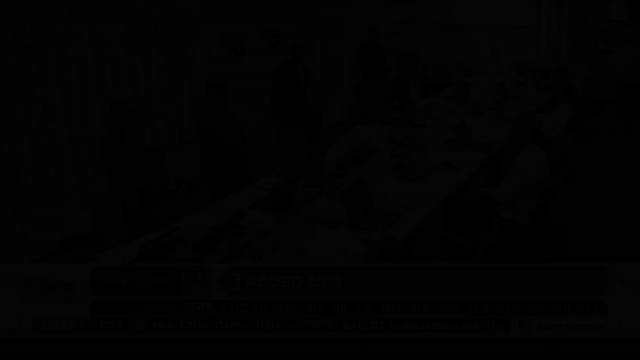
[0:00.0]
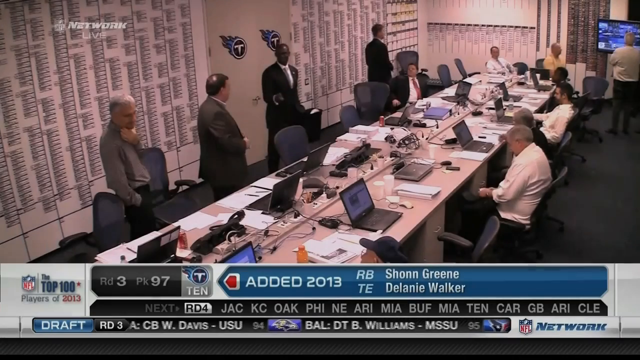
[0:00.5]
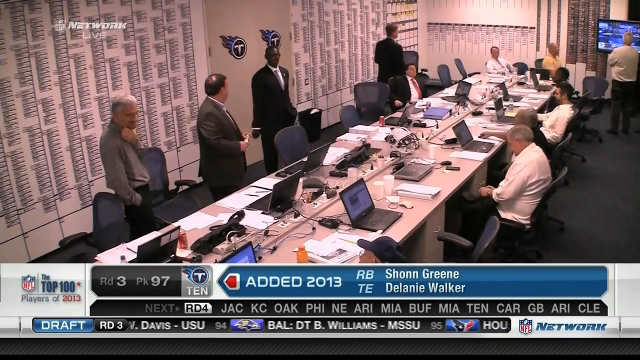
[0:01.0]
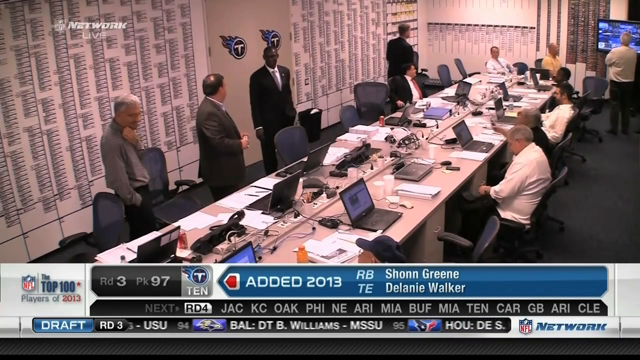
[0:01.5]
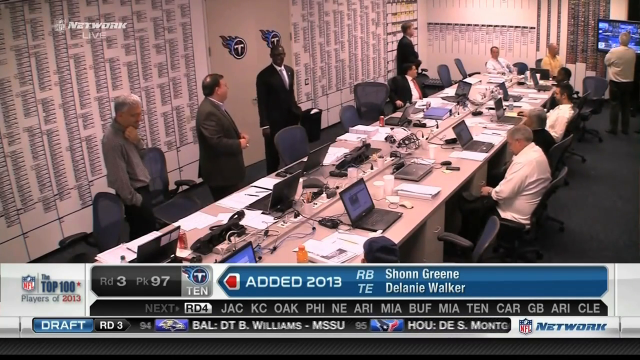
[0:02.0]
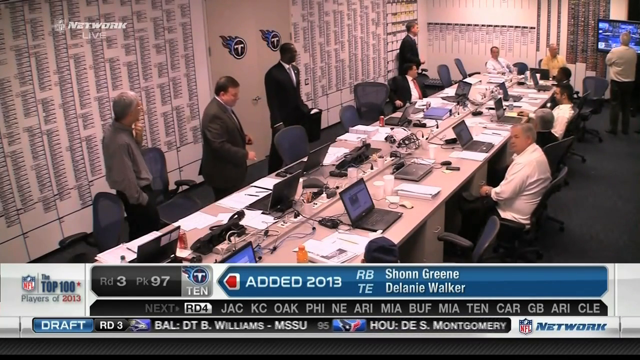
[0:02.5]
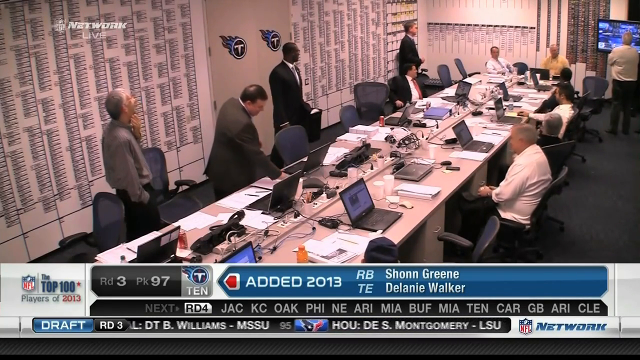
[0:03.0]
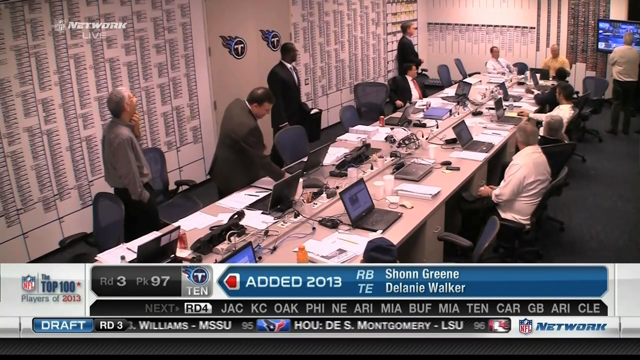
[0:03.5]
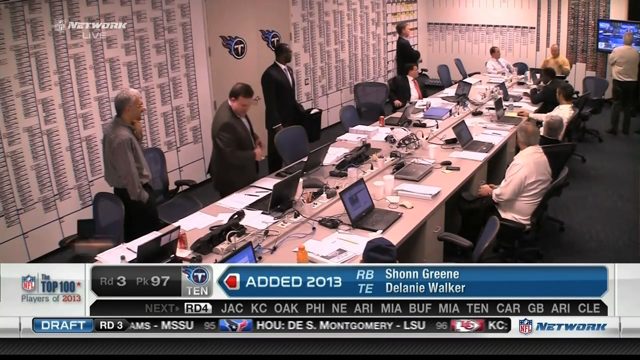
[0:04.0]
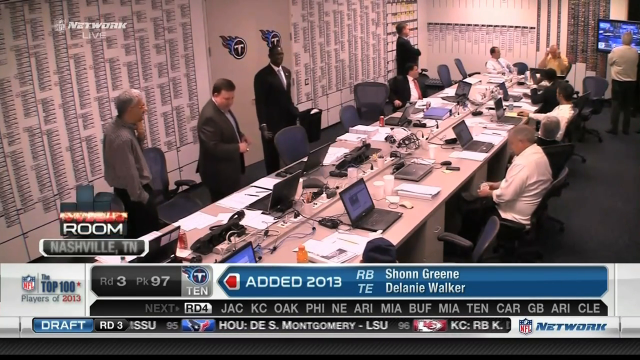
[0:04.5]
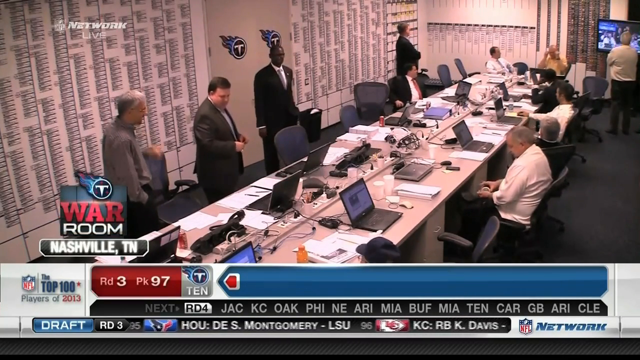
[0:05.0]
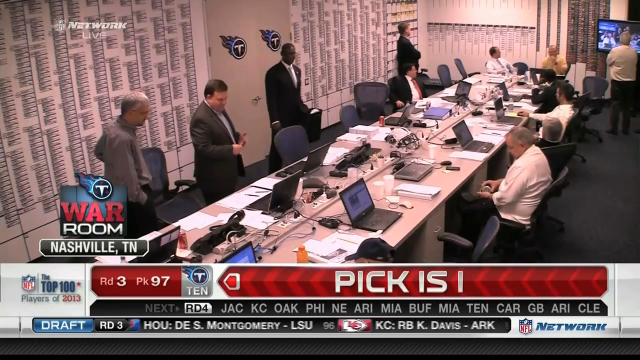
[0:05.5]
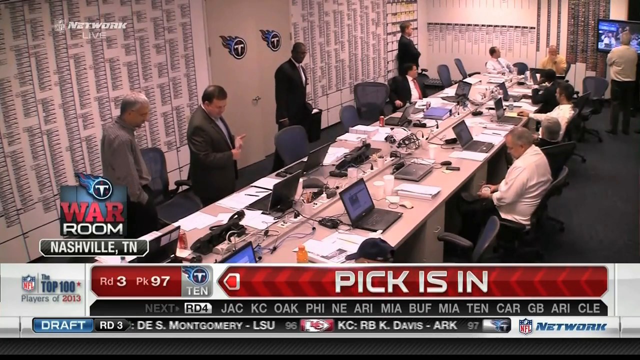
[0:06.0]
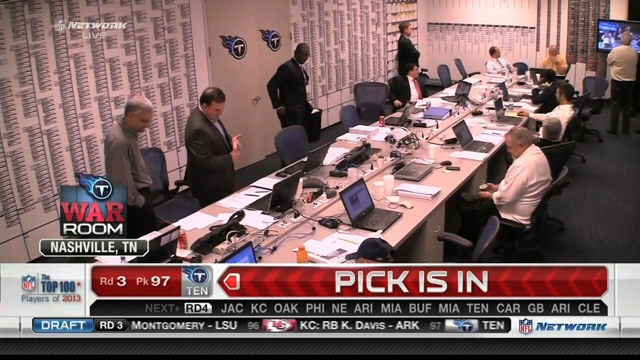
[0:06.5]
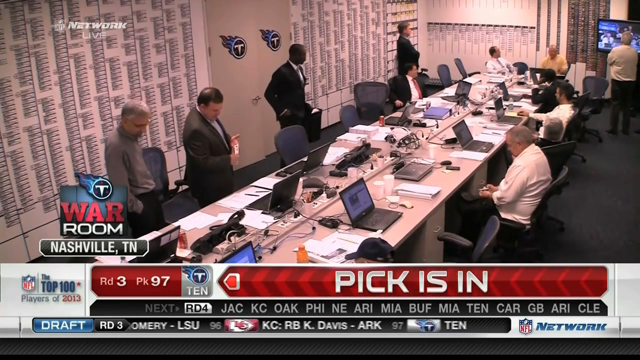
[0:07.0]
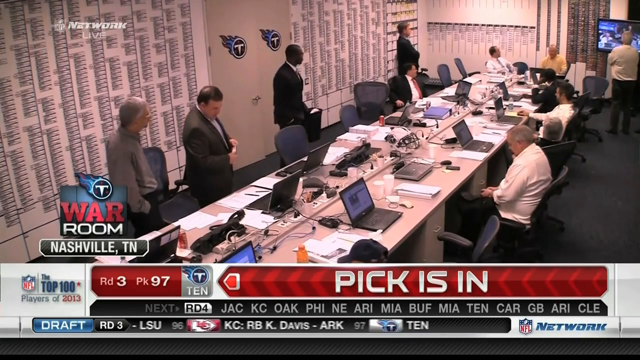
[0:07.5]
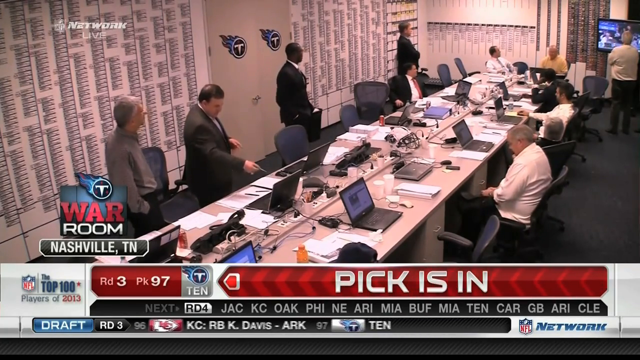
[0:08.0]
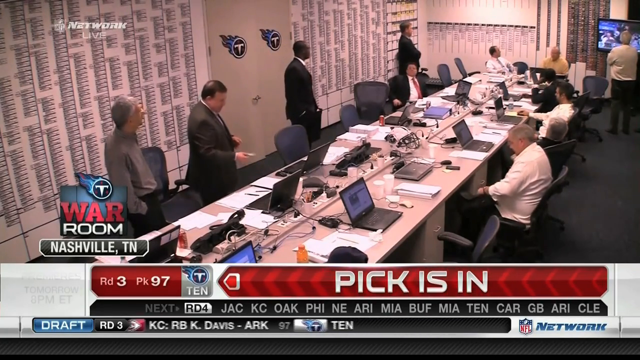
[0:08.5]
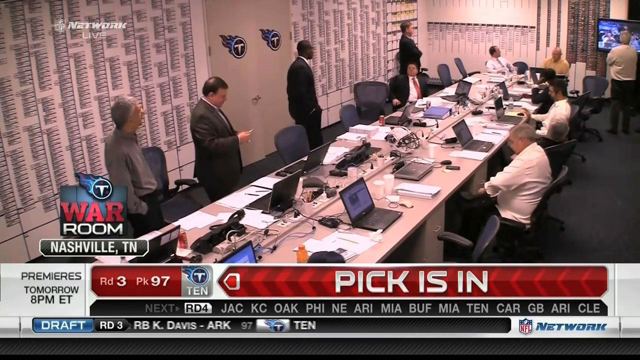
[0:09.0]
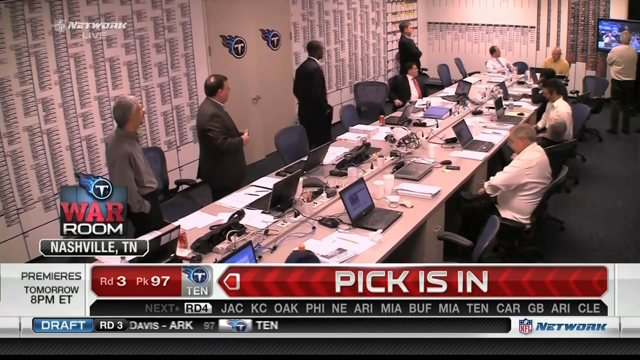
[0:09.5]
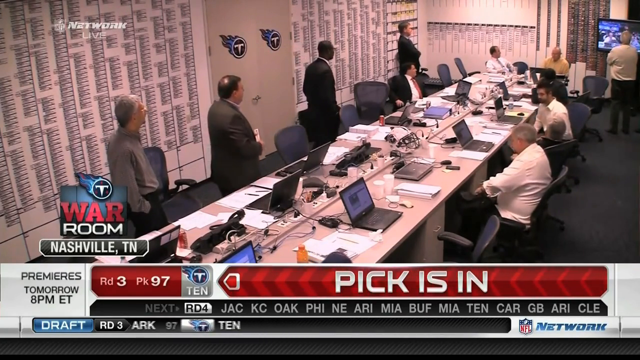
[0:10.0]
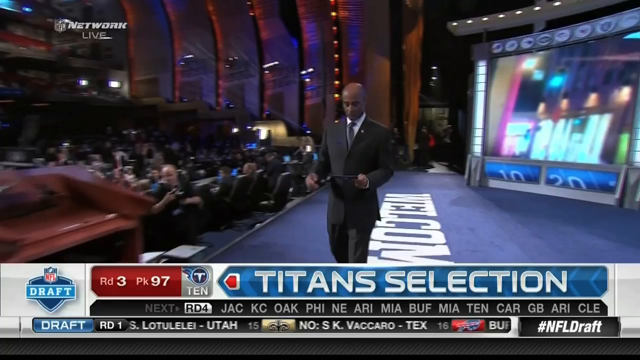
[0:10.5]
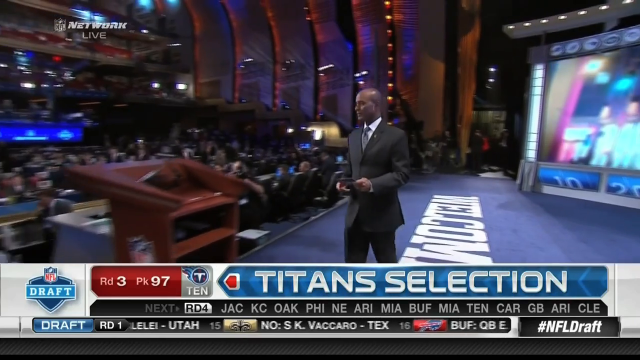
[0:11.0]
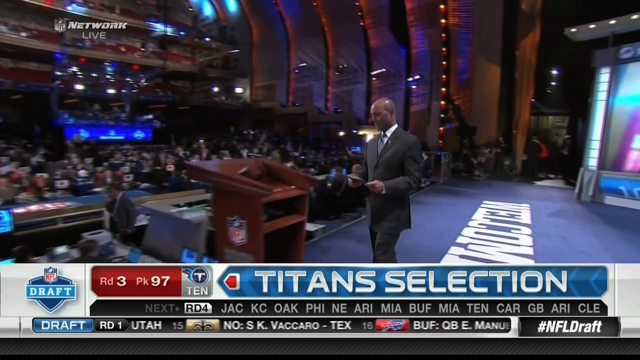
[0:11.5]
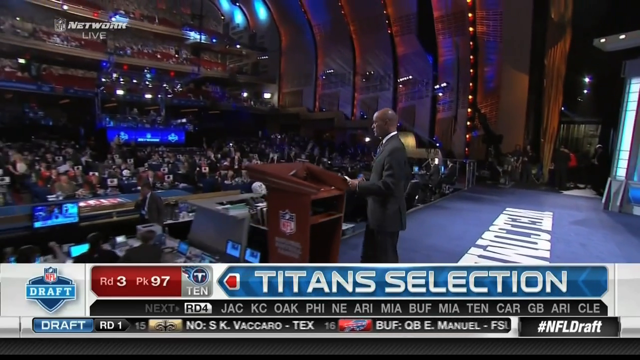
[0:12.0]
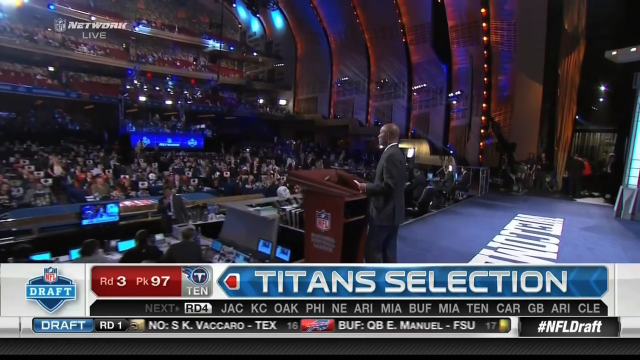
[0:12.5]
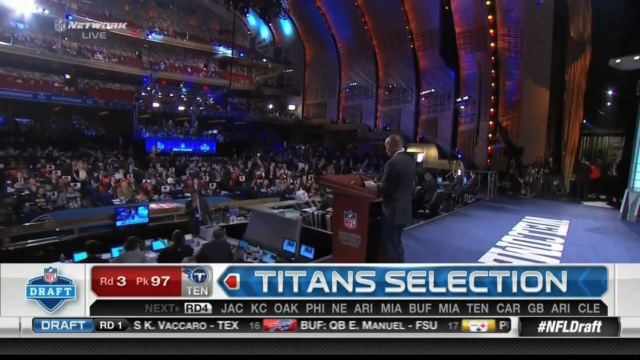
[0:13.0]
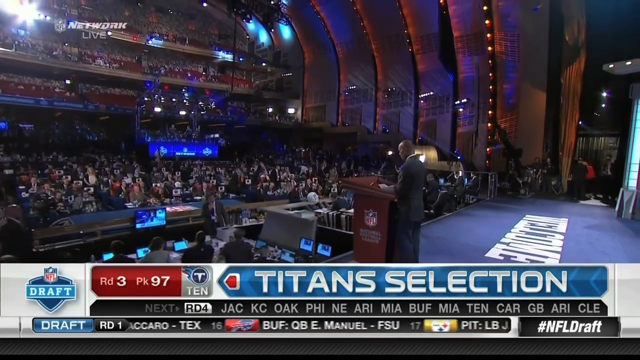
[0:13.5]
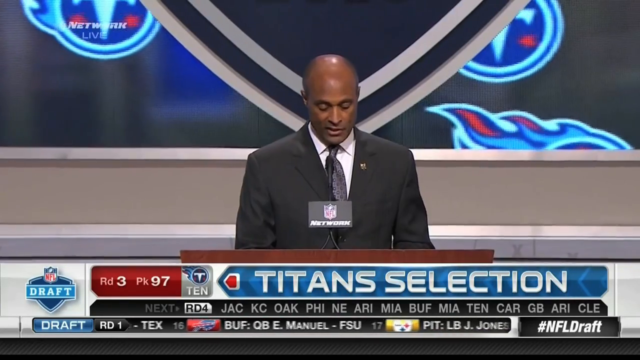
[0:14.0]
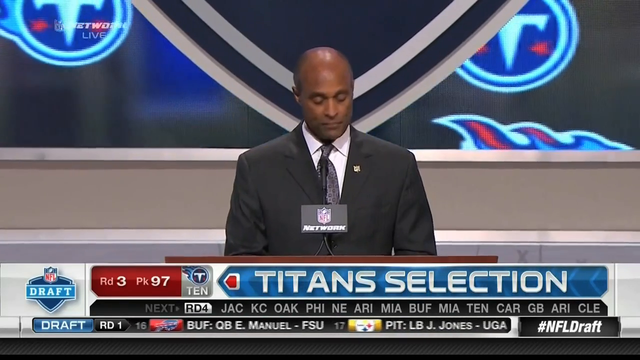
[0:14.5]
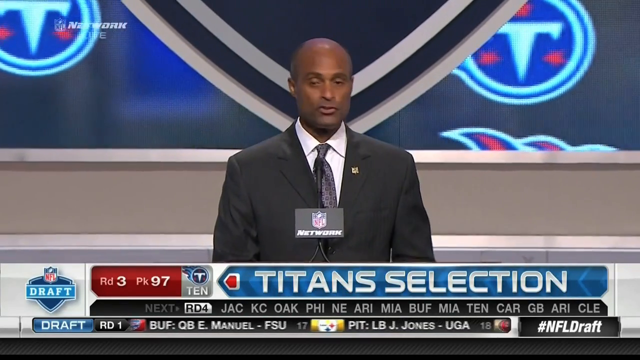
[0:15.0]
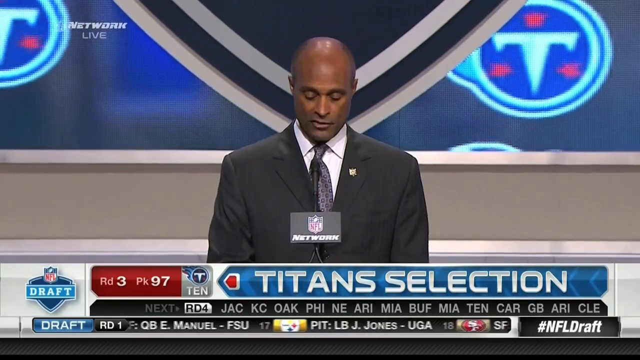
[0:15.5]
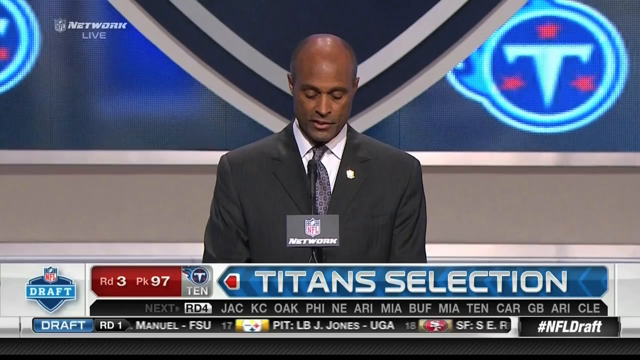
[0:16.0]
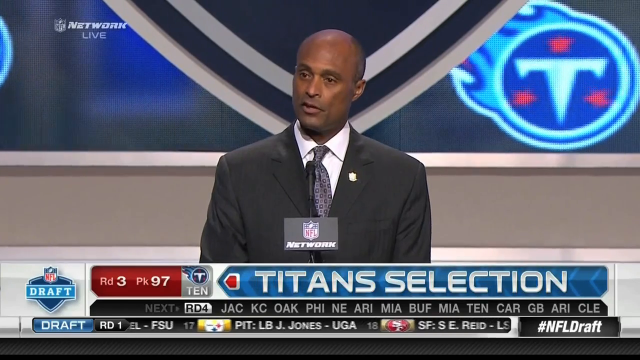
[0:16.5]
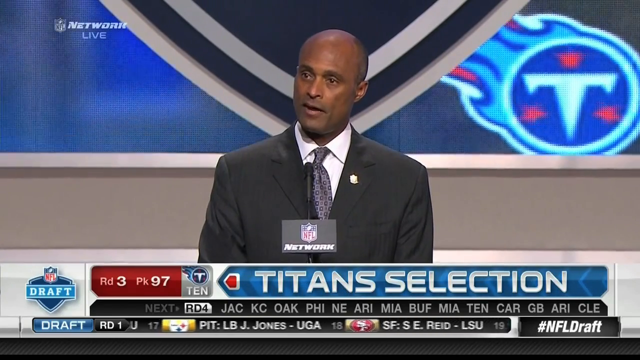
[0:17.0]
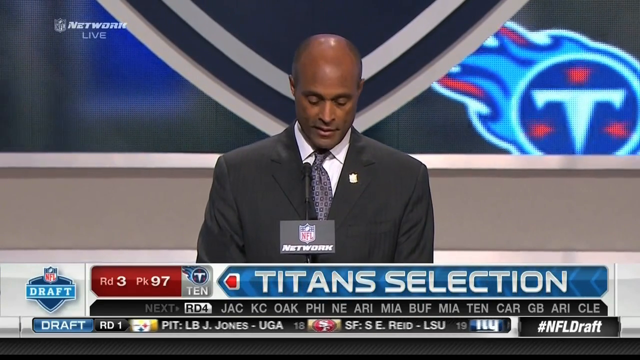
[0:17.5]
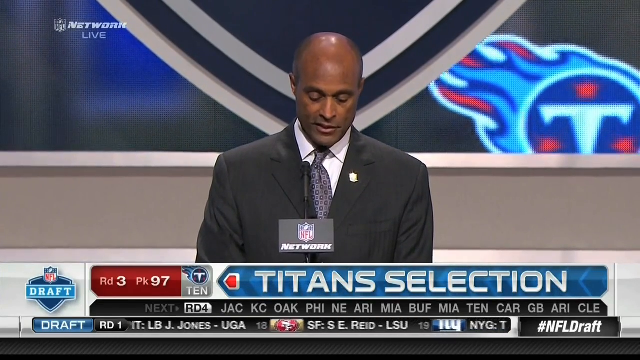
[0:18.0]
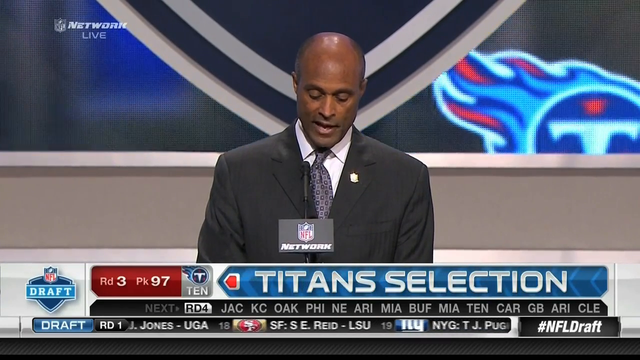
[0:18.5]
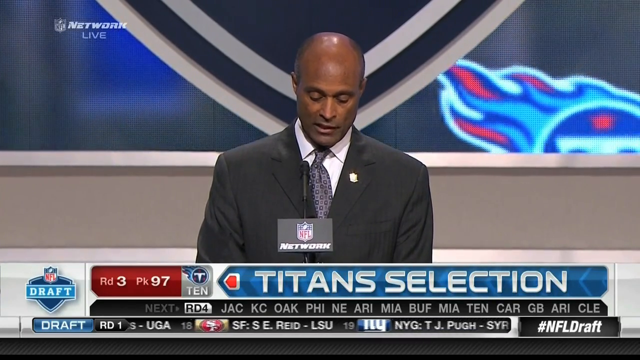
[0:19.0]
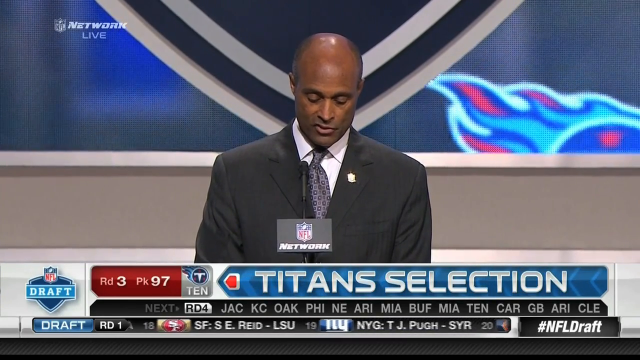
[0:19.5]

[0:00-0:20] The video opens in an office setting with a long set of desks and approximately sixteen computers laid out. There are men in suits with ties and others in button-down shirts and slacks; many of them are sitting and waiting, watching a screen. There are 12 gentlemen in the room. On the screen it says "Added 2013, R.B. Sean Green, T.E. Delaney Walker" and "War Room, Nashville, Tennessee." Information about the NFL, including the draft, runs along the bottom of the screen. A man comes to the podium regarding the Titans selection. He is brown-complected and balding, with a slight shadow line of hair along the edges around his ears. He wears a brown suit, a gray and black tie, a white button-down shirt, and a gold button on his left lapel. He appears to be talking to the crowd.